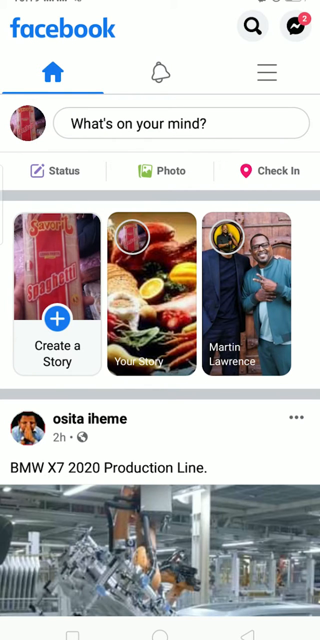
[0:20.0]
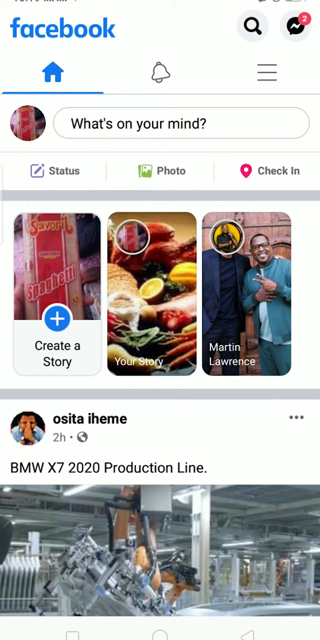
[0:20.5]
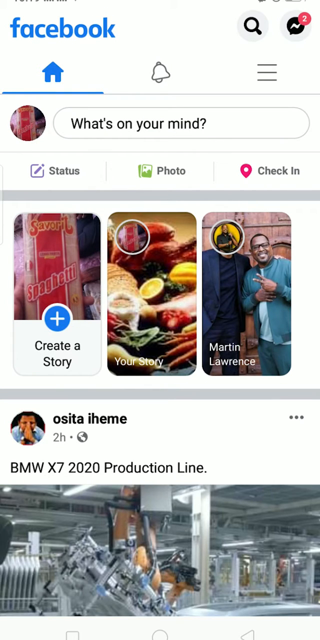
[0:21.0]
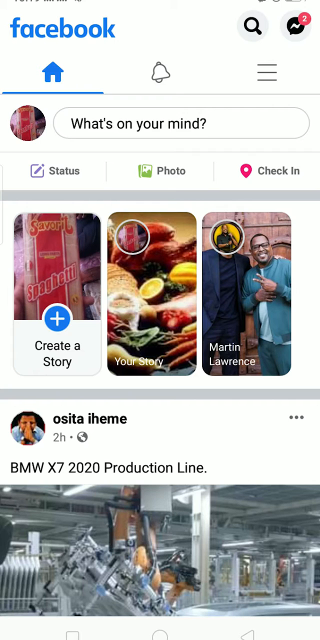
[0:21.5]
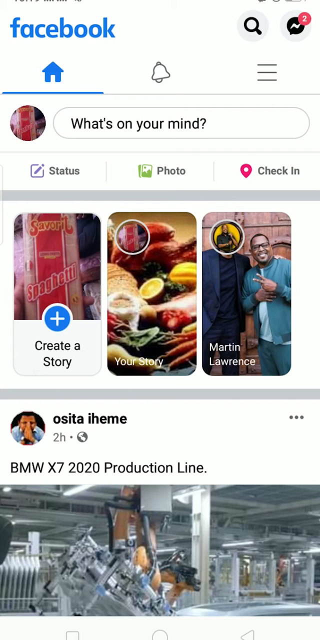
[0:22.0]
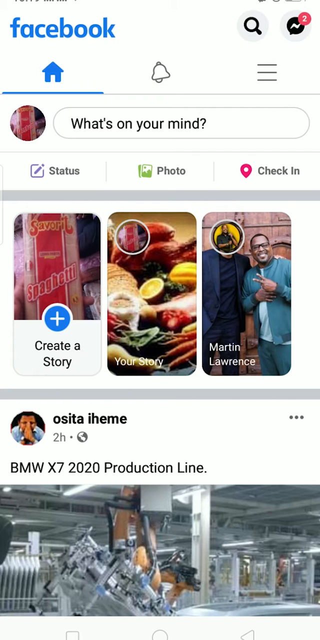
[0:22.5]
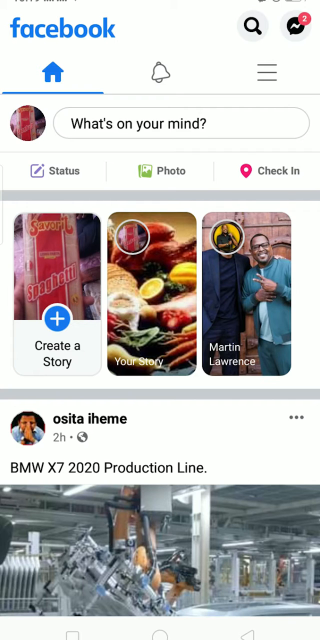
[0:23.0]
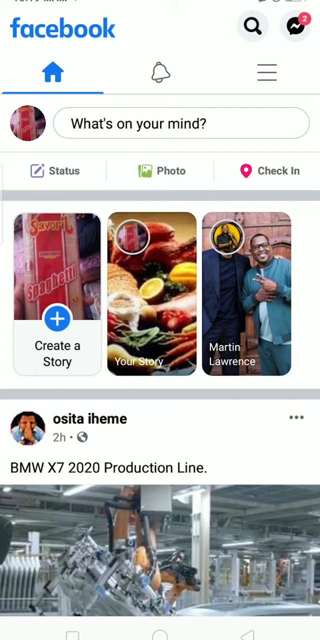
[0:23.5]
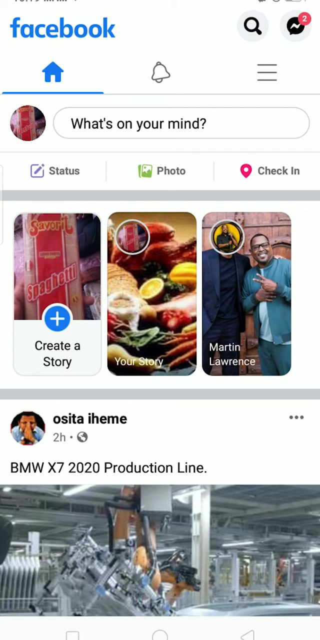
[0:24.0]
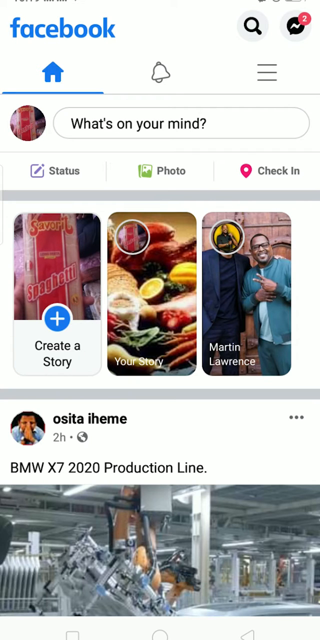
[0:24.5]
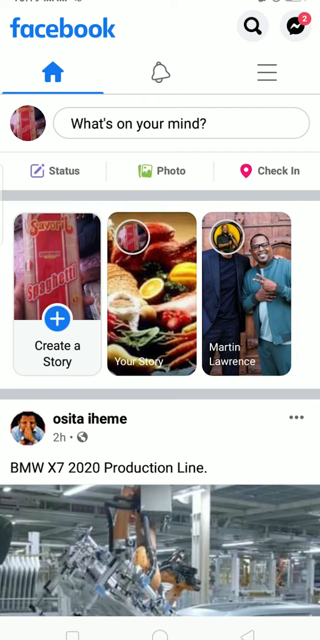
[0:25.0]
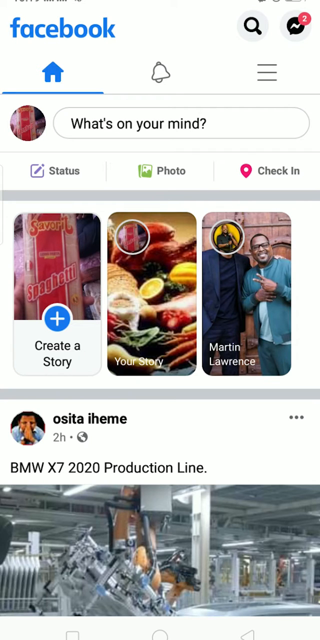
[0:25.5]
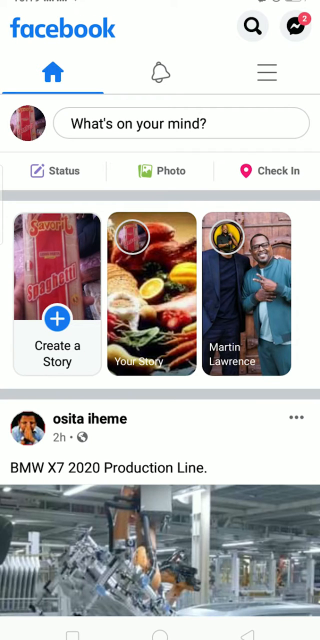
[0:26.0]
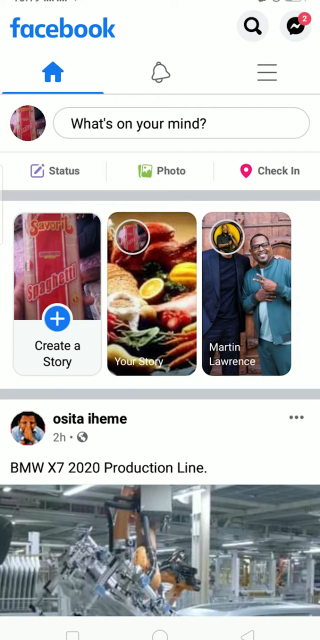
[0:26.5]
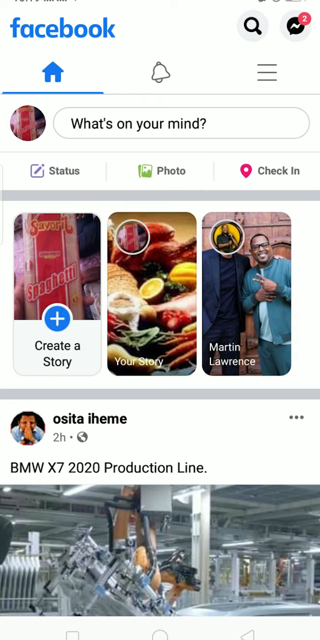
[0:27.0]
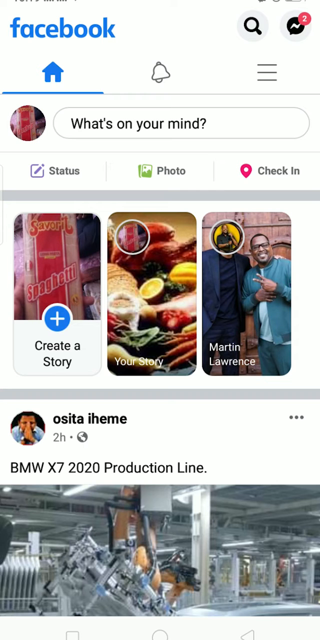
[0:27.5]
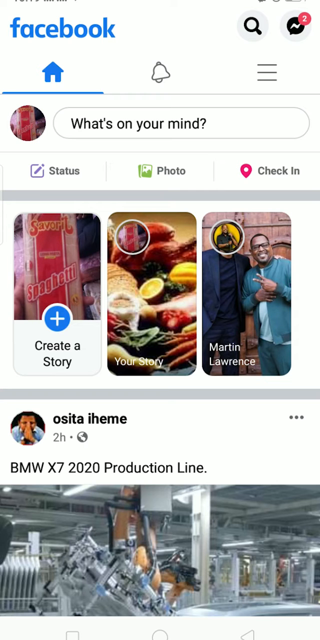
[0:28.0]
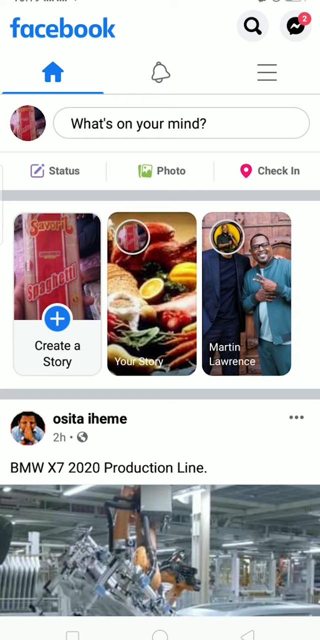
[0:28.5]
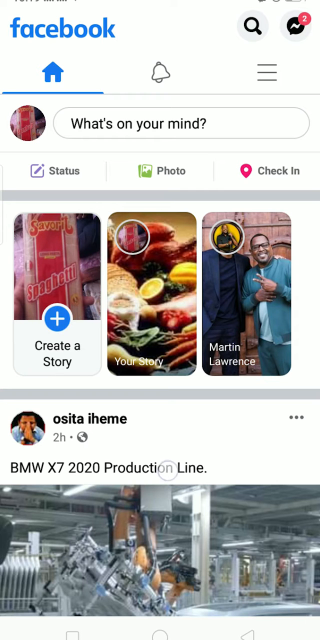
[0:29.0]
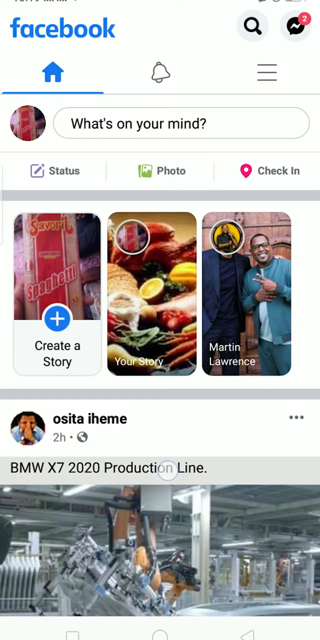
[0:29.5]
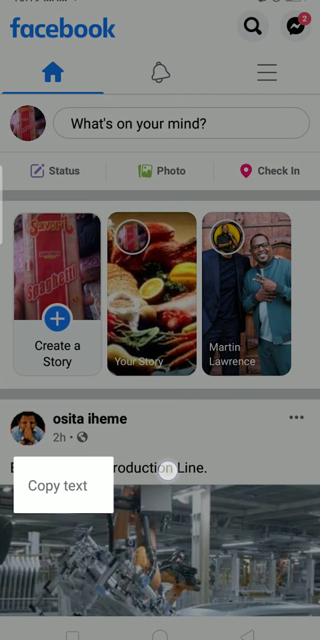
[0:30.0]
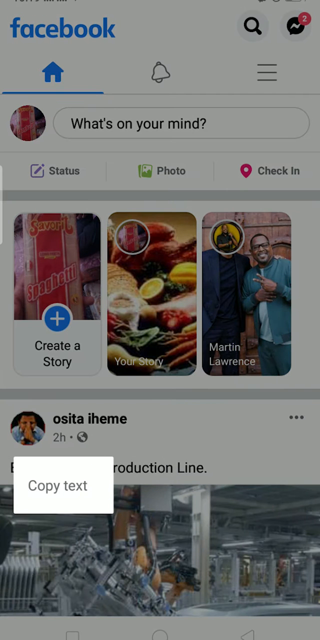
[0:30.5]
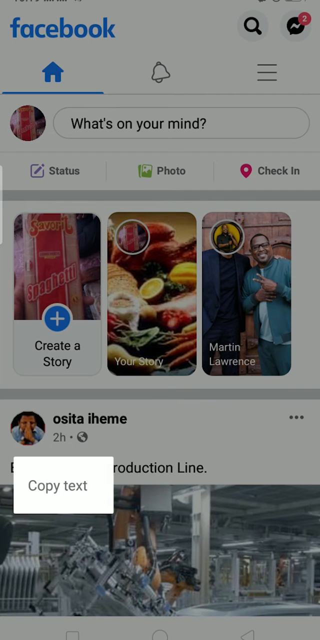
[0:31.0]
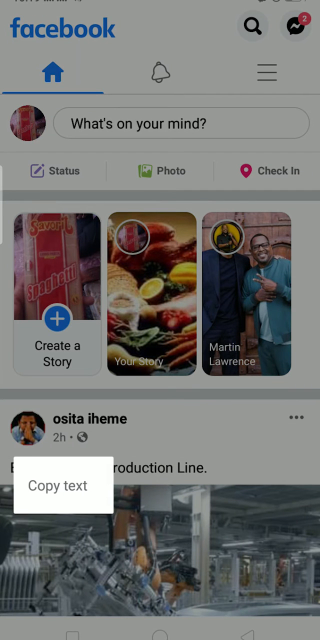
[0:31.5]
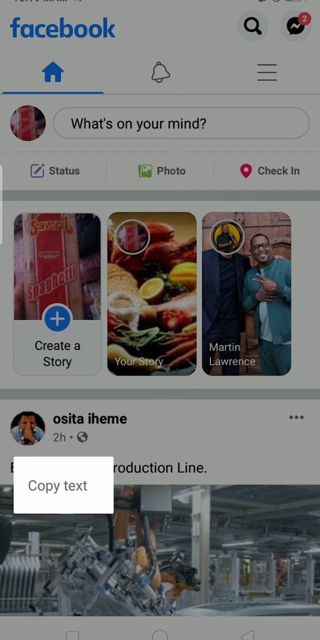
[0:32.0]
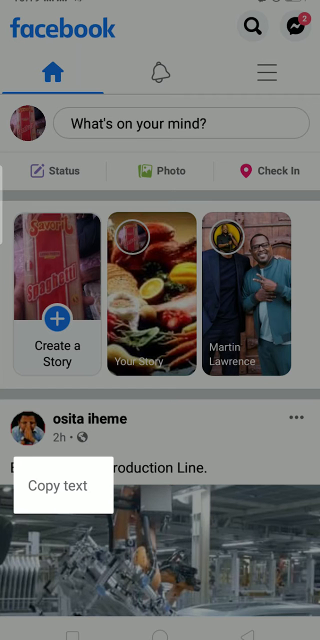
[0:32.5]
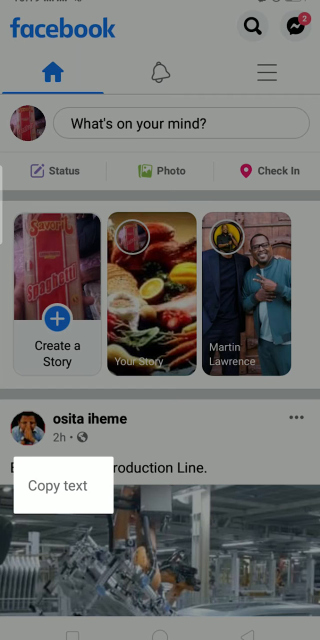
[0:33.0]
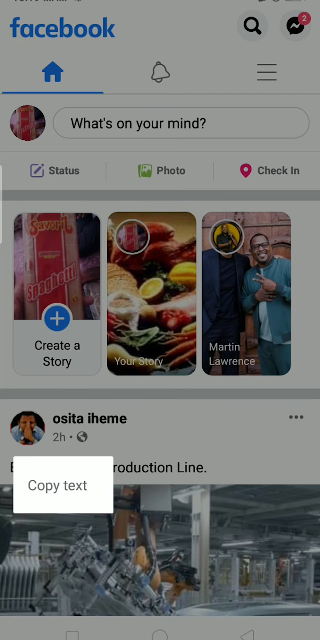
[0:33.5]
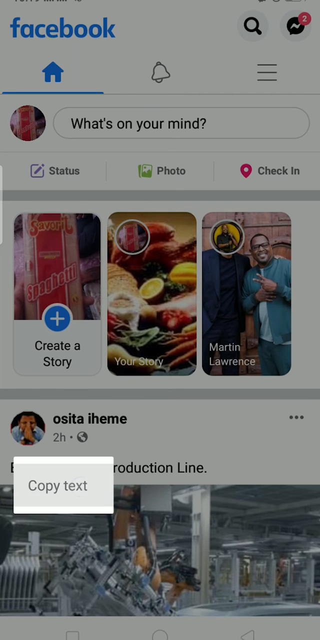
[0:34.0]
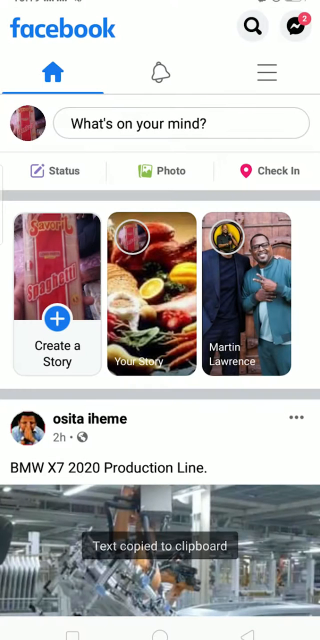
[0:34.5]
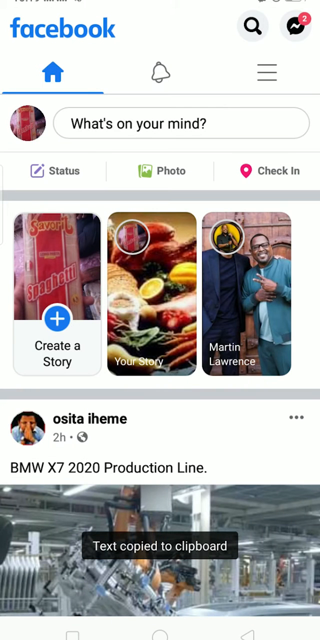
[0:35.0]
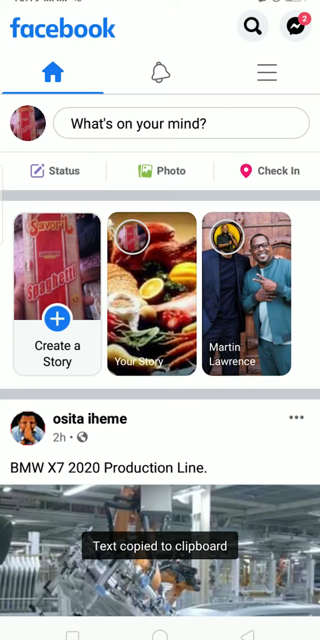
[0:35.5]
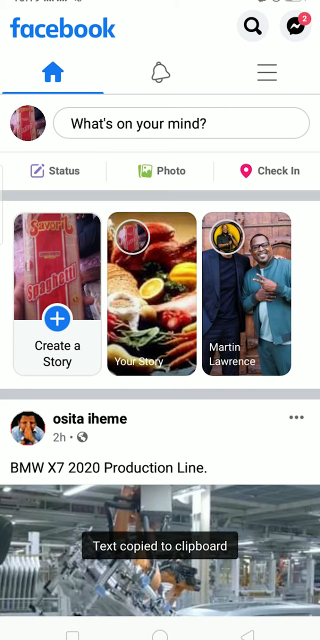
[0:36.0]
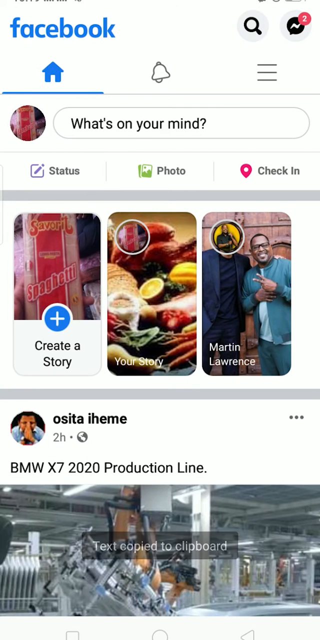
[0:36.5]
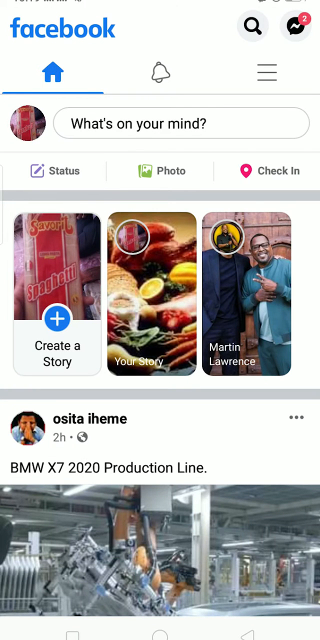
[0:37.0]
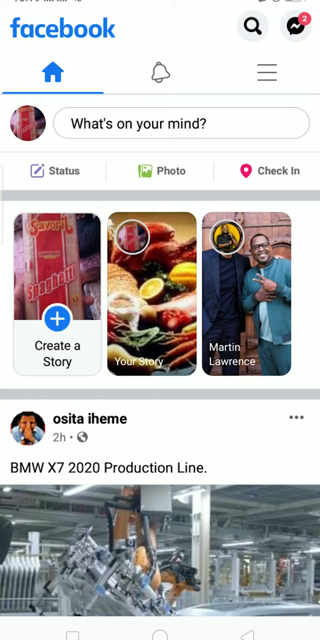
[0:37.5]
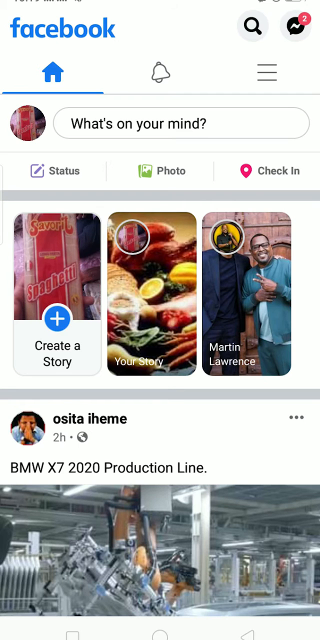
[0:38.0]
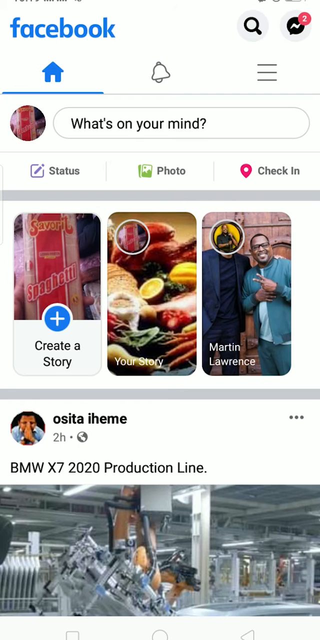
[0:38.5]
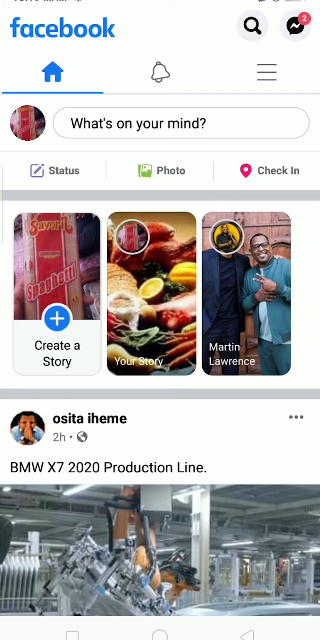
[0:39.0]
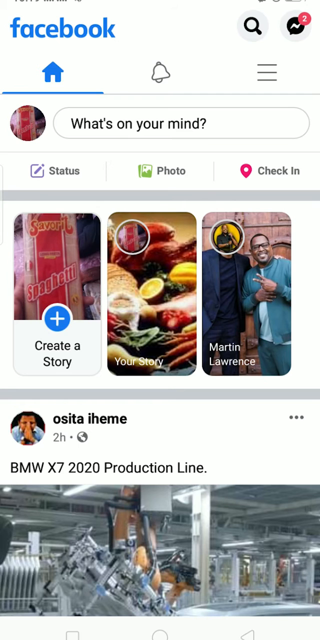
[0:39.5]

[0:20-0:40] The video appears almost completely frozen. Then the little icon shows up and highlights it, a copy text box pops up on the left, and the circular icon clicks "copy text." A good-sized pop-up then appears in the center over the video saying "text copied to clipboard." Apart from this, the frame stays still. It appears to be a screen capture of someone's video.